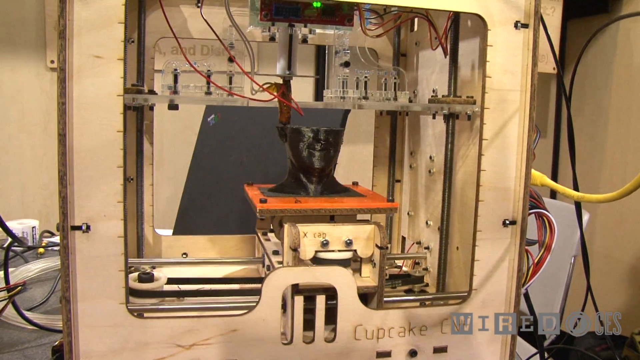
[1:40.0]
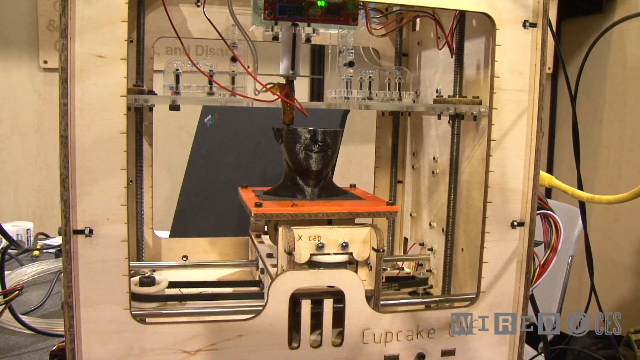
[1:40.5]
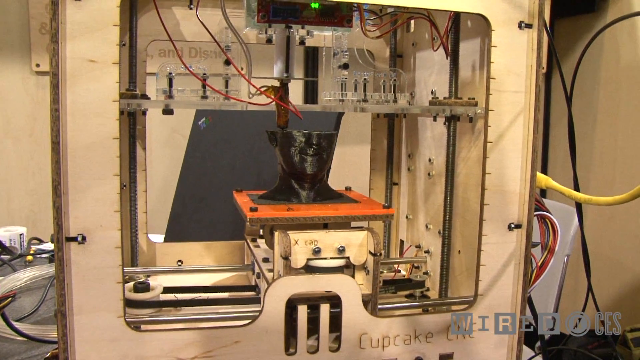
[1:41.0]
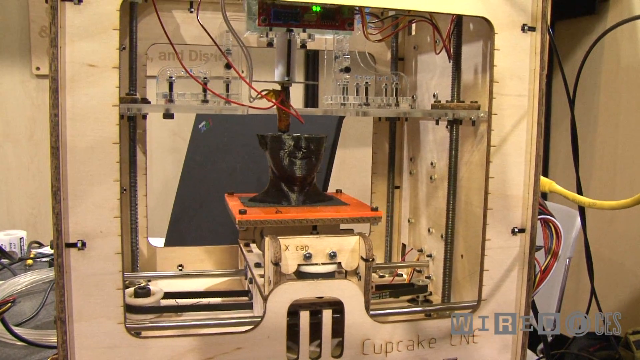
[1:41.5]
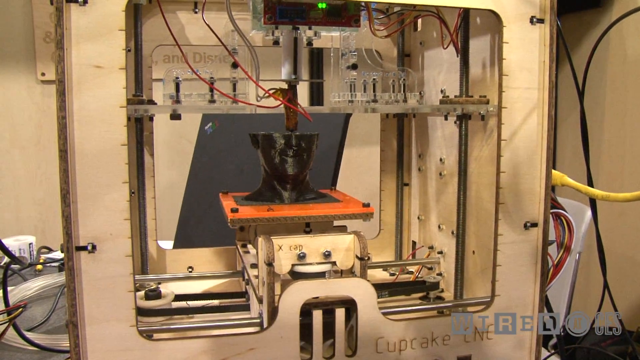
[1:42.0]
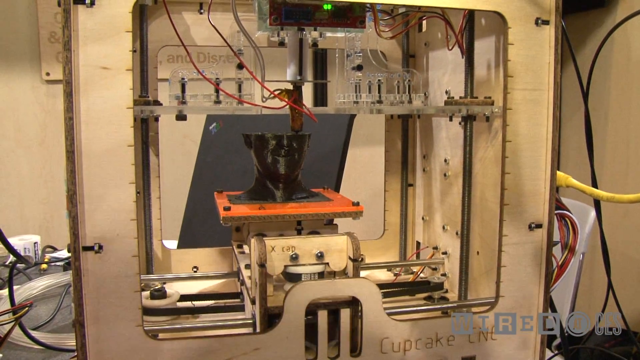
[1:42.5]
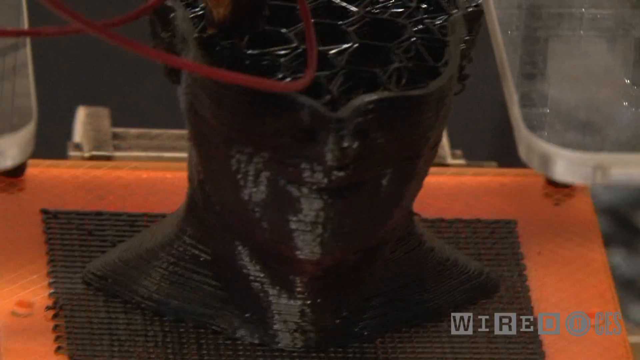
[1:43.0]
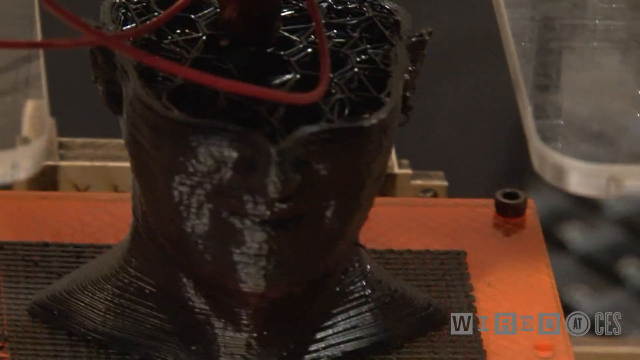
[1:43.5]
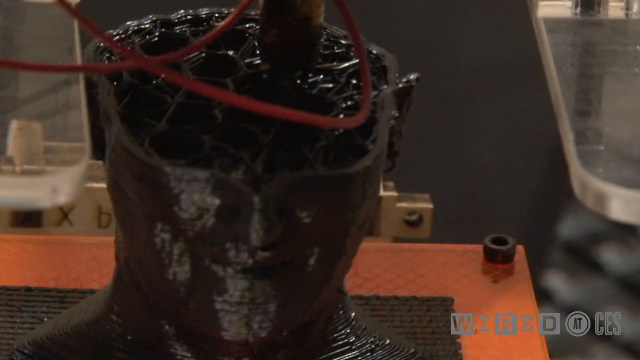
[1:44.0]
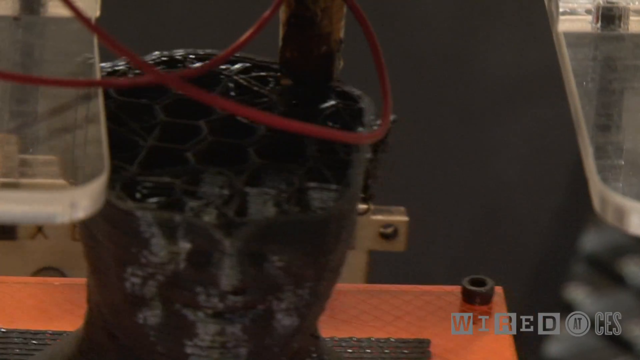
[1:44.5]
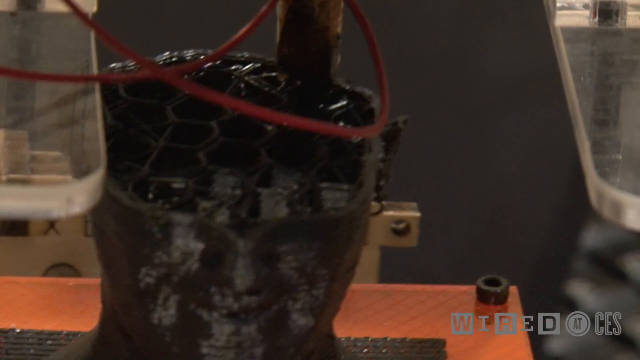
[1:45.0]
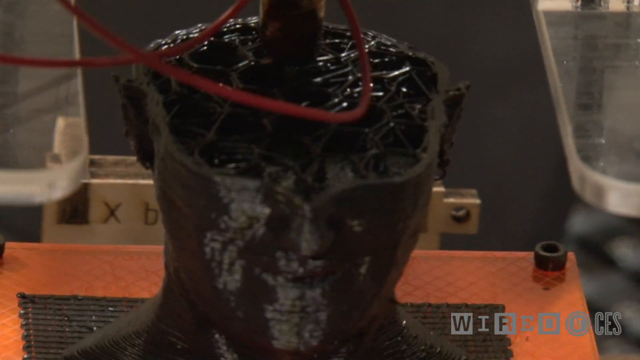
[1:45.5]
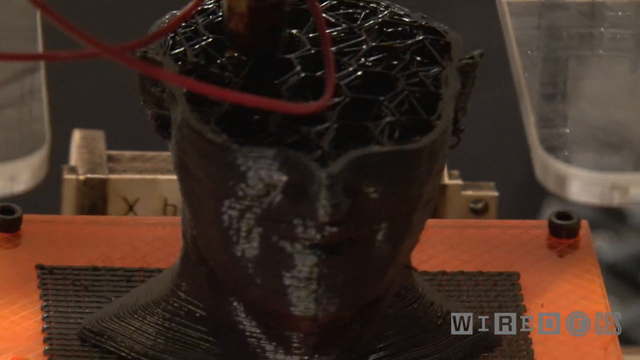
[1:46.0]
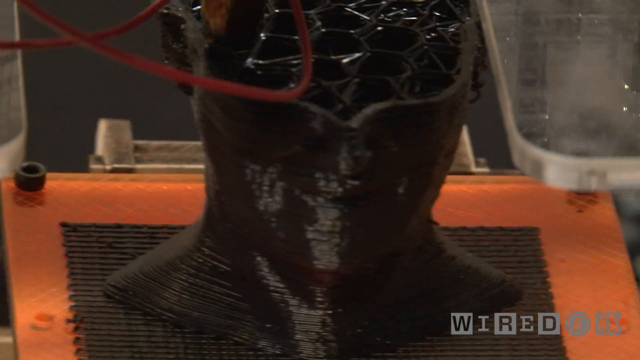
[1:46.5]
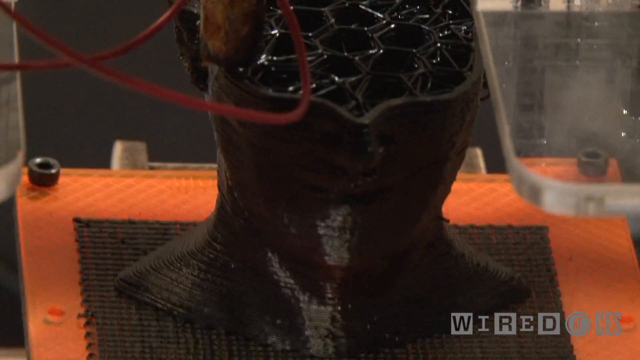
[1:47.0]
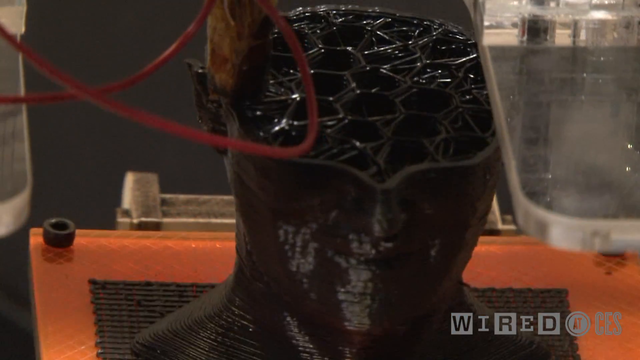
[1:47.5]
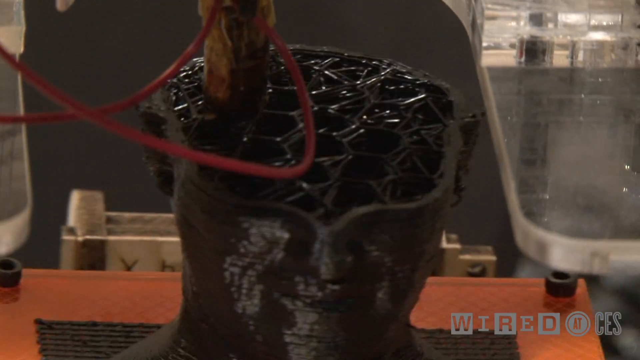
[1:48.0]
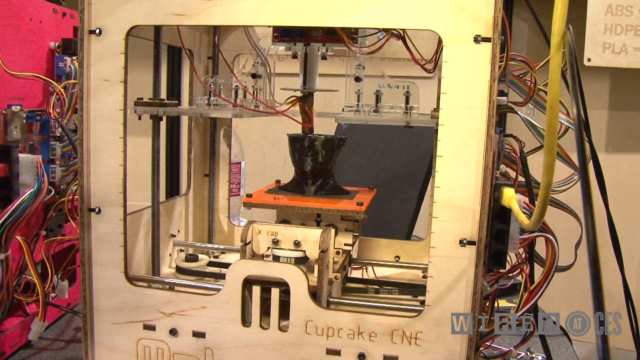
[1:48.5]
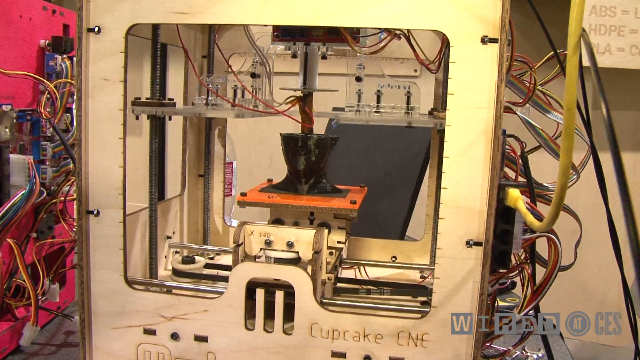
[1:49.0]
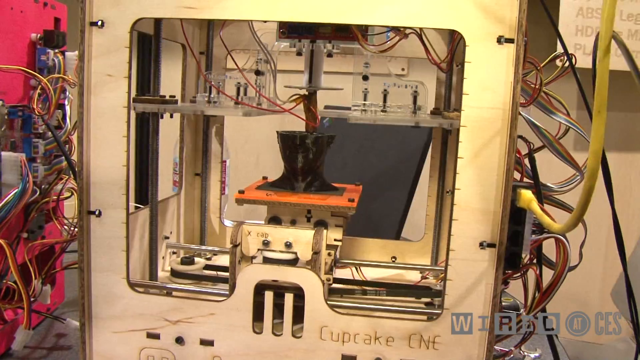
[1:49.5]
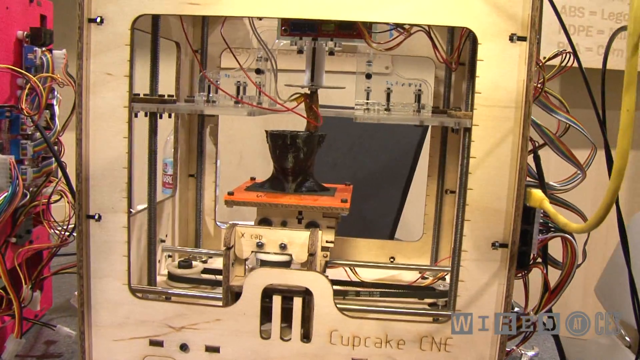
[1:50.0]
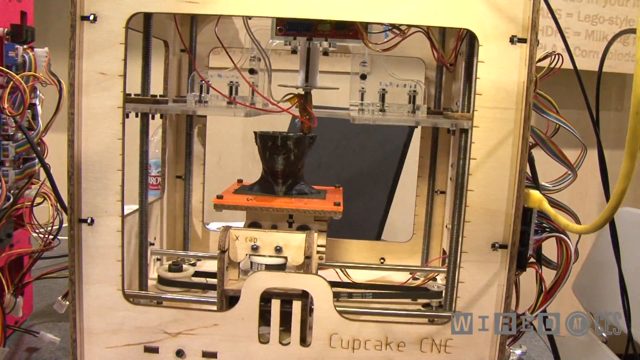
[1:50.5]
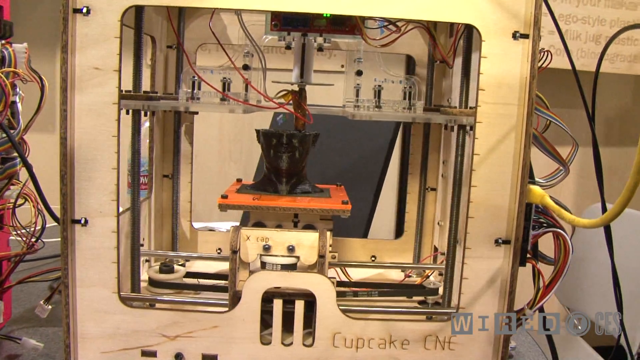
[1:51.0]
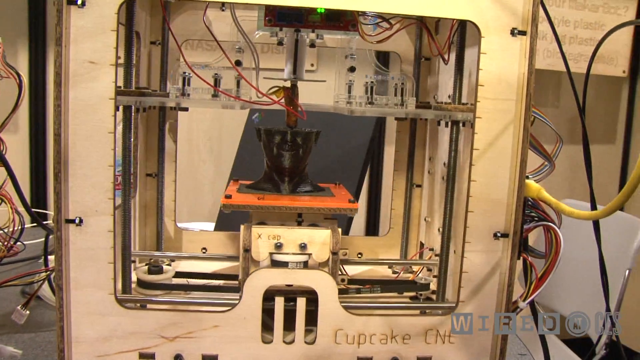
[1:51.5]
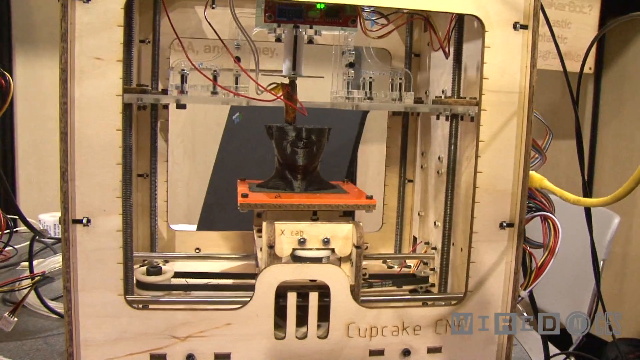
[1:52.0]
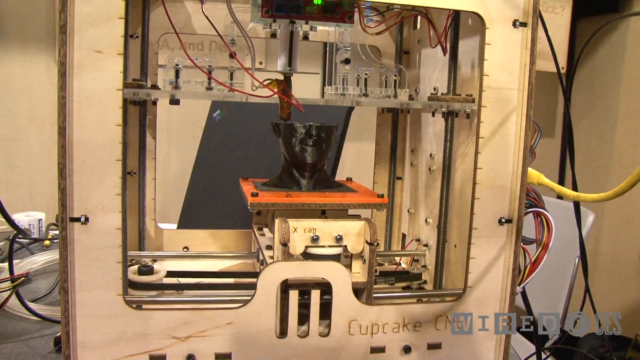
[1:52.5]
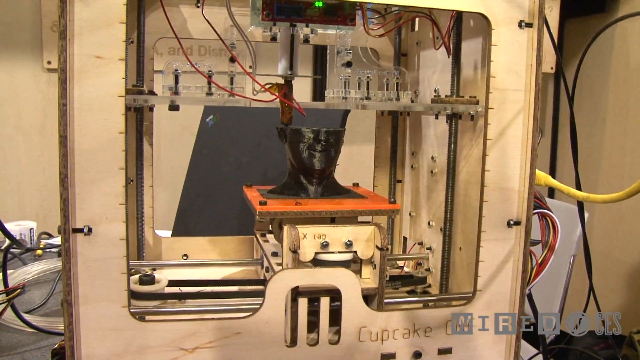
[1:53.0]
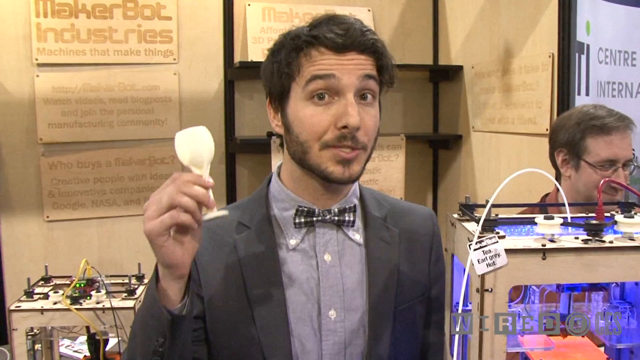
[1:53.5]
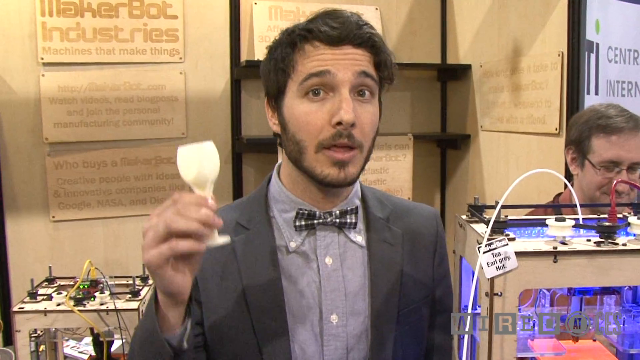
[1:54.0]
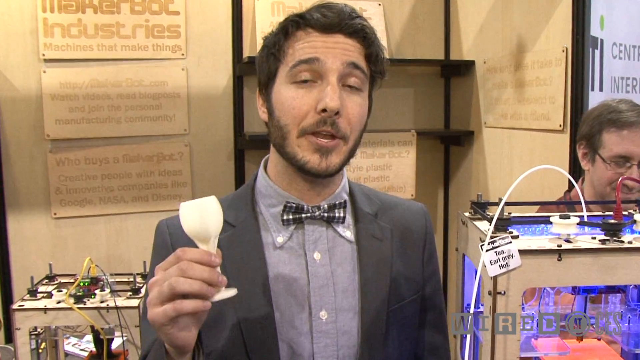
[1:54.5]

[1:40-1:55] An even closer view zooms in on the contraption. The head has a bunch of holes in it, and the process is easier to see; the machine may be filling in those holes with the material, covering it while moving in a figure-eight pattern. The face is pretty intricate. The image then merges into a shot of the man holding up a little white object that looks like a wine glass or some kind of bottle, very small compared to what is being made.